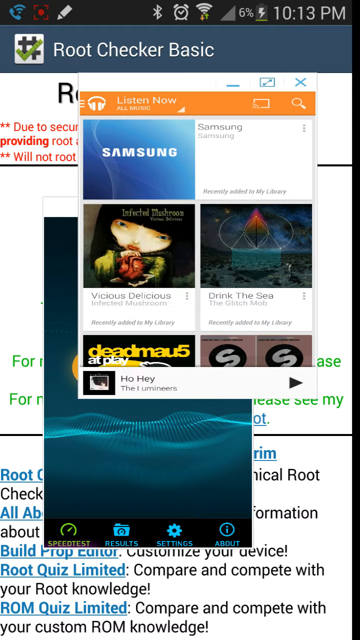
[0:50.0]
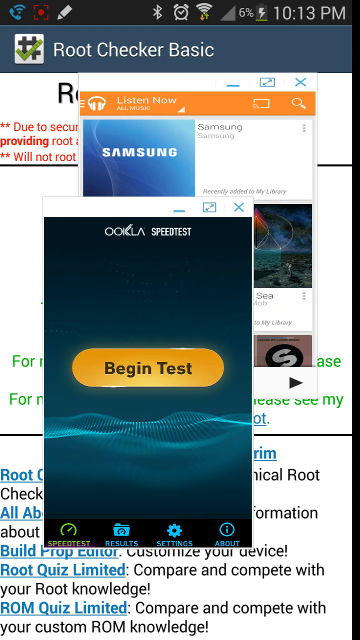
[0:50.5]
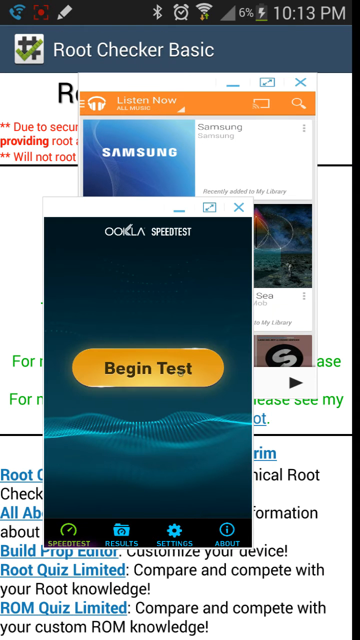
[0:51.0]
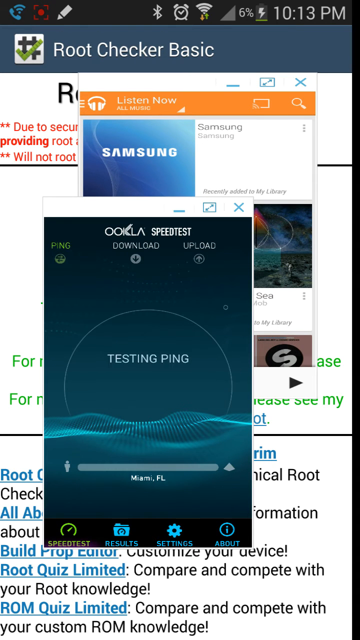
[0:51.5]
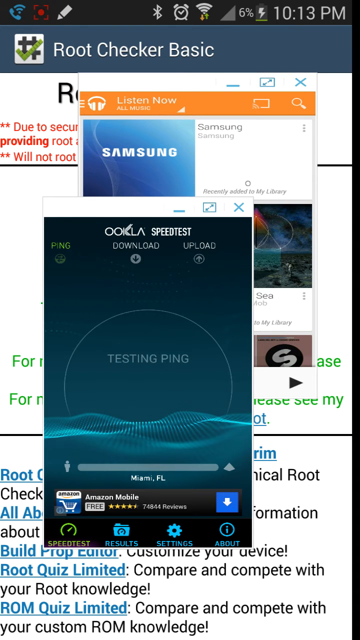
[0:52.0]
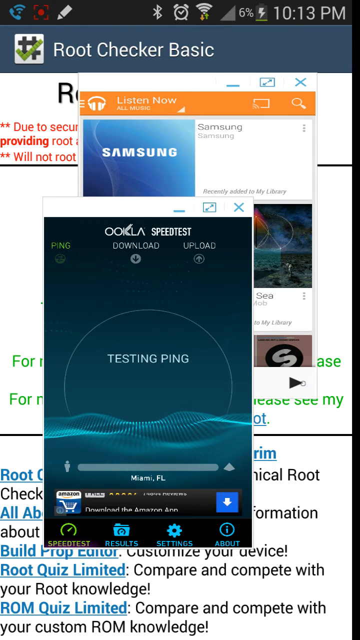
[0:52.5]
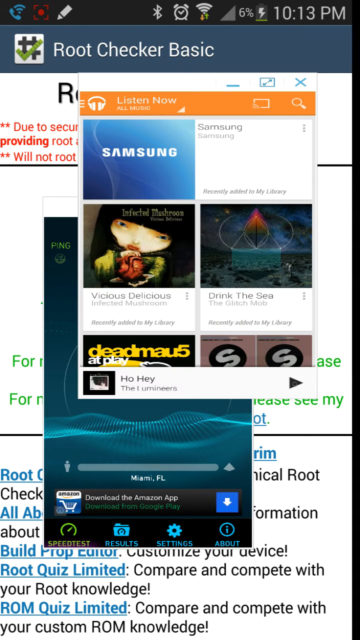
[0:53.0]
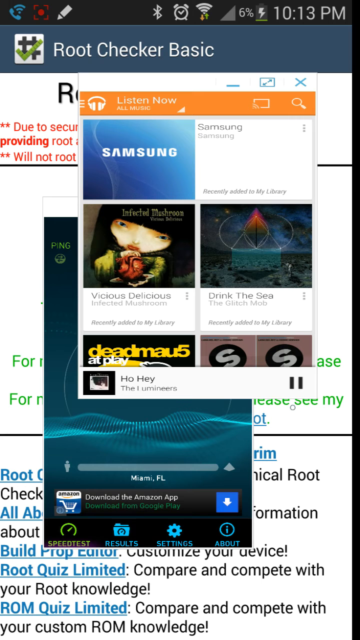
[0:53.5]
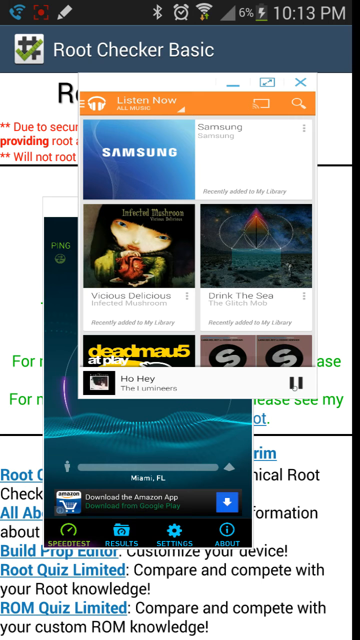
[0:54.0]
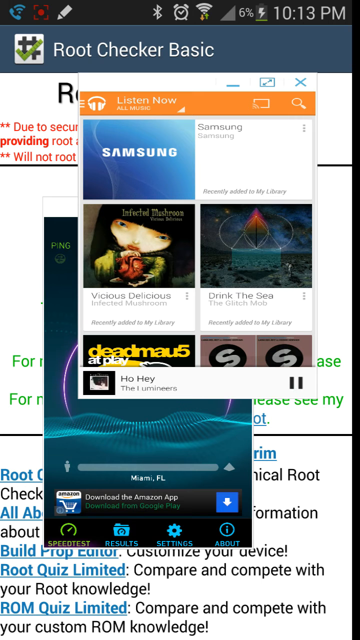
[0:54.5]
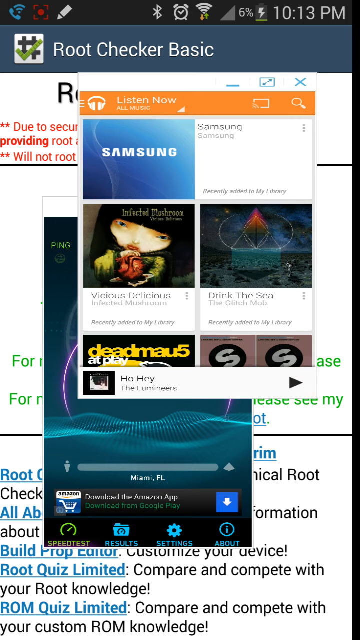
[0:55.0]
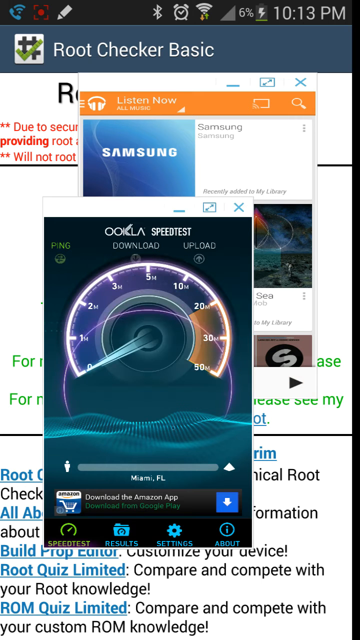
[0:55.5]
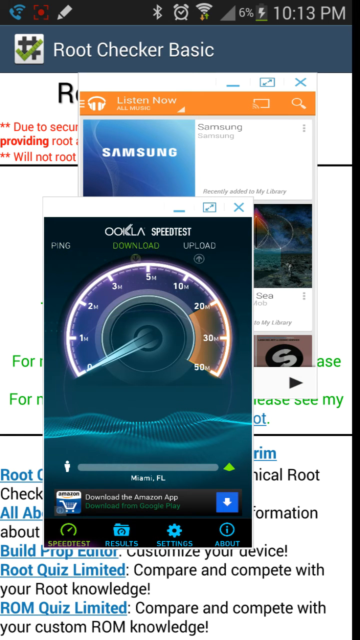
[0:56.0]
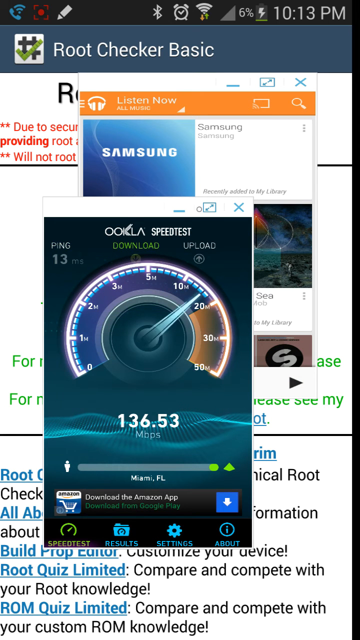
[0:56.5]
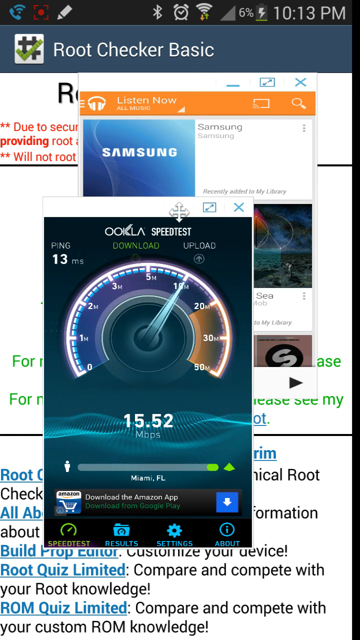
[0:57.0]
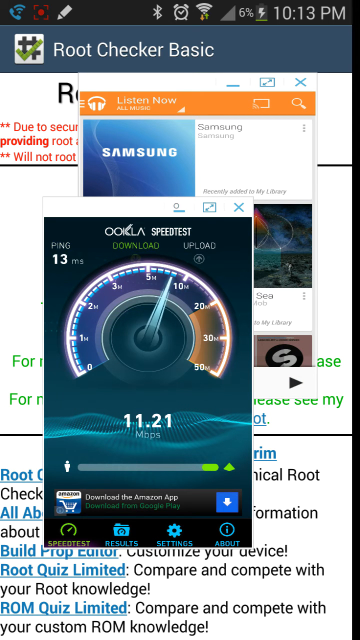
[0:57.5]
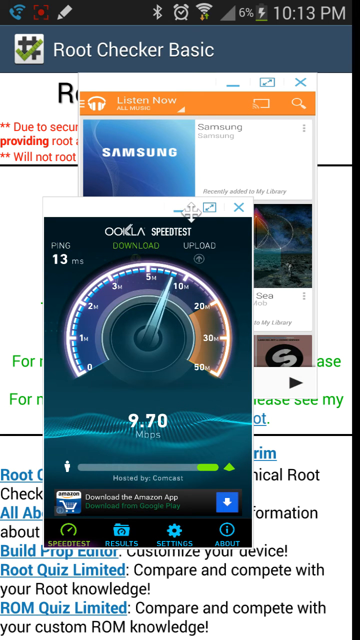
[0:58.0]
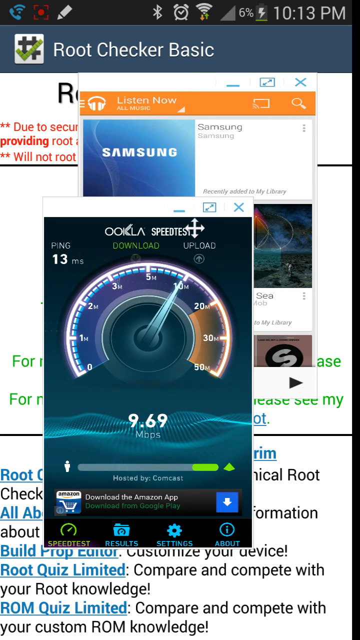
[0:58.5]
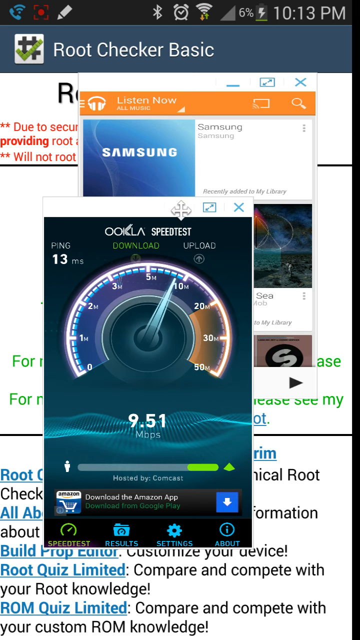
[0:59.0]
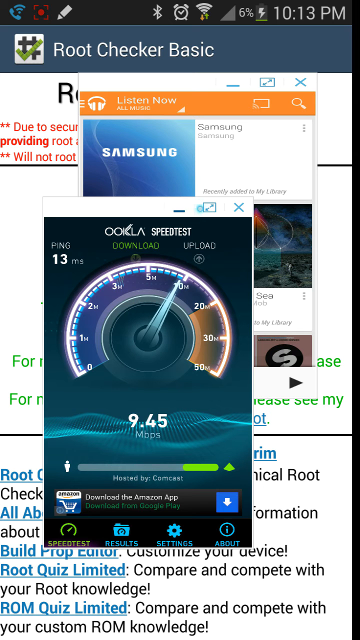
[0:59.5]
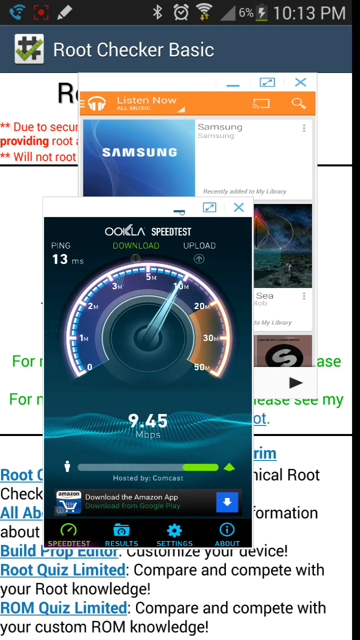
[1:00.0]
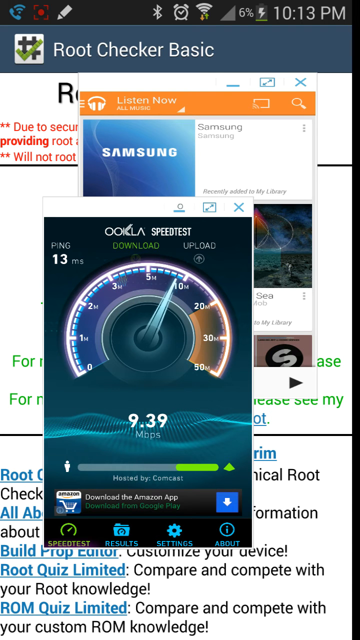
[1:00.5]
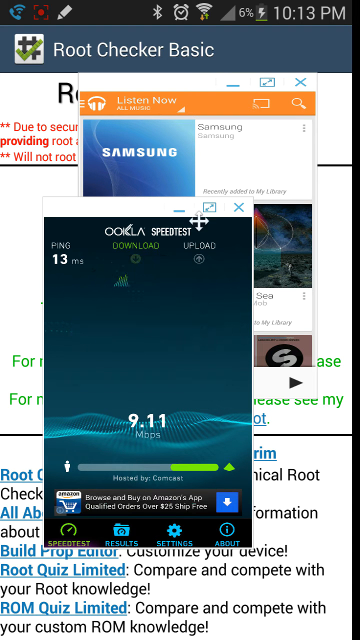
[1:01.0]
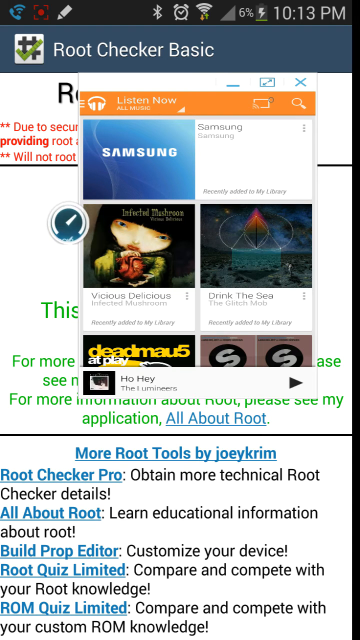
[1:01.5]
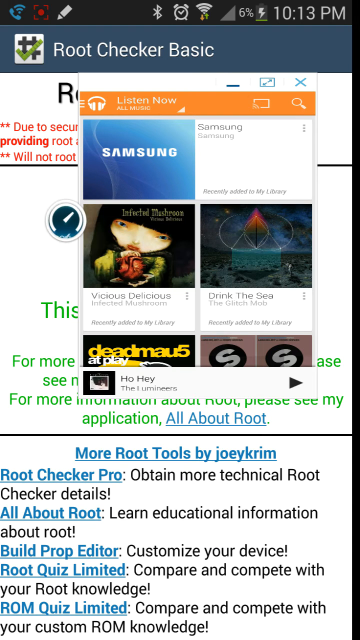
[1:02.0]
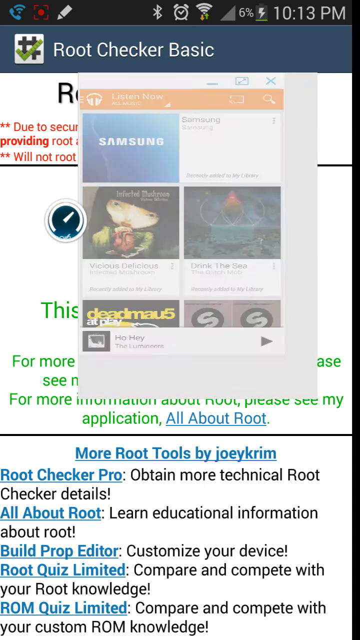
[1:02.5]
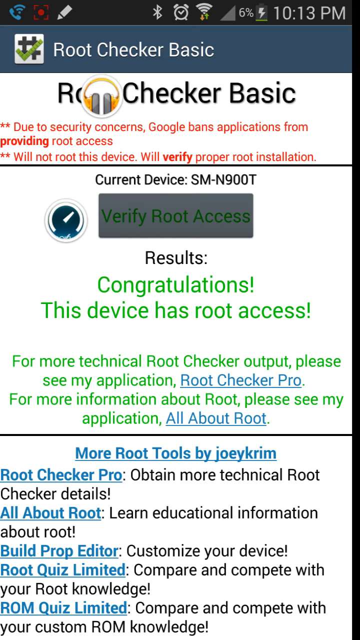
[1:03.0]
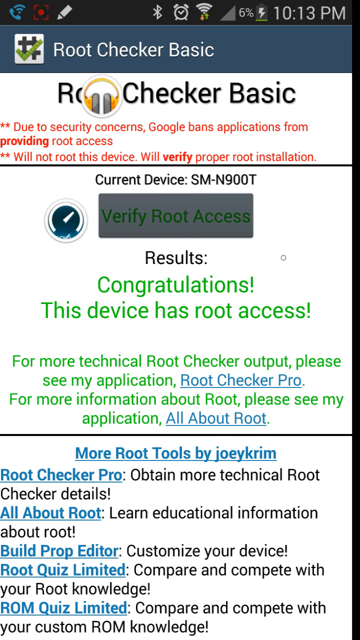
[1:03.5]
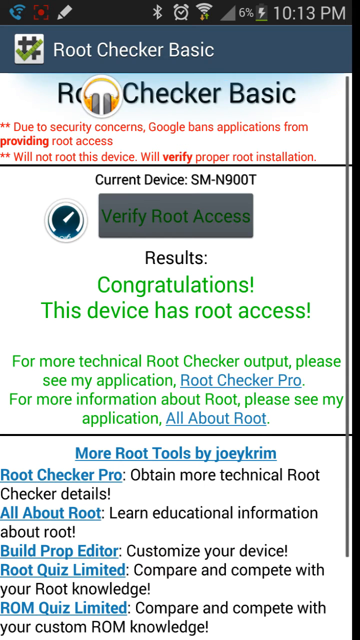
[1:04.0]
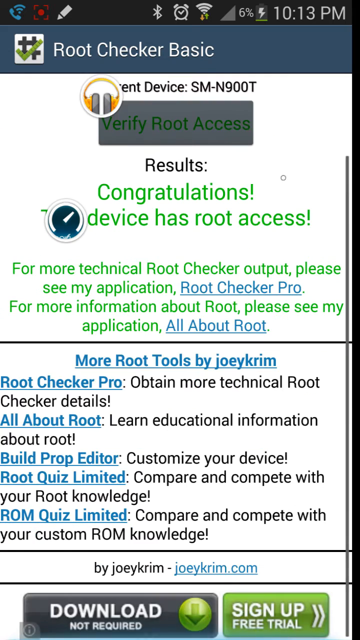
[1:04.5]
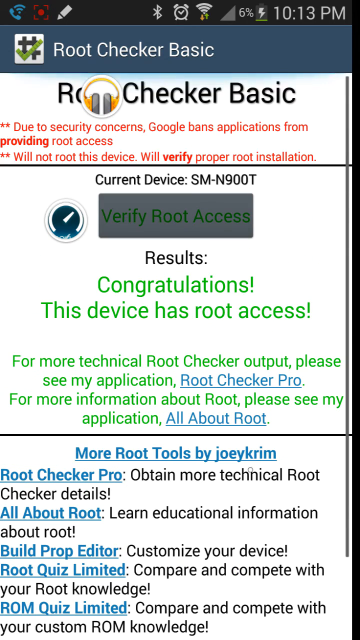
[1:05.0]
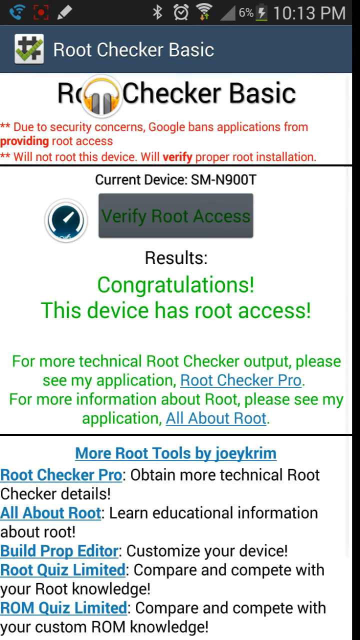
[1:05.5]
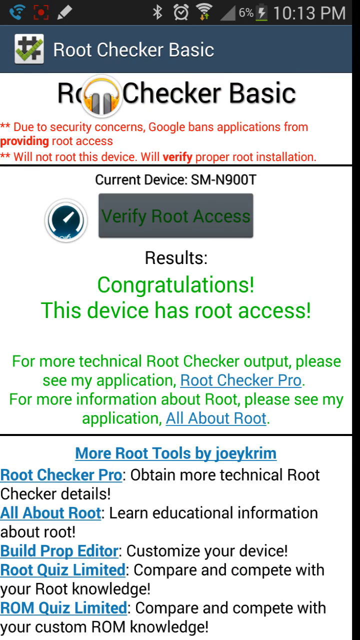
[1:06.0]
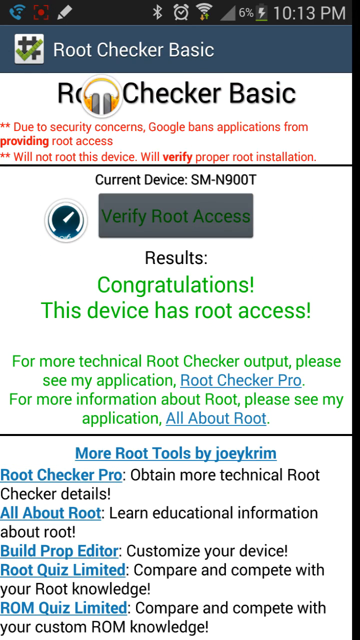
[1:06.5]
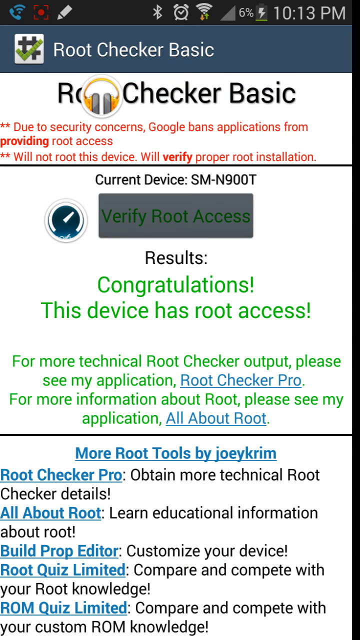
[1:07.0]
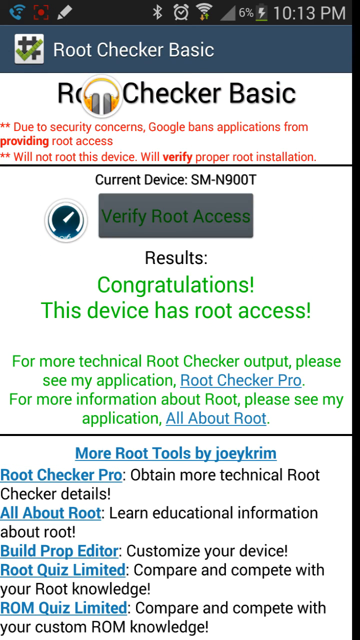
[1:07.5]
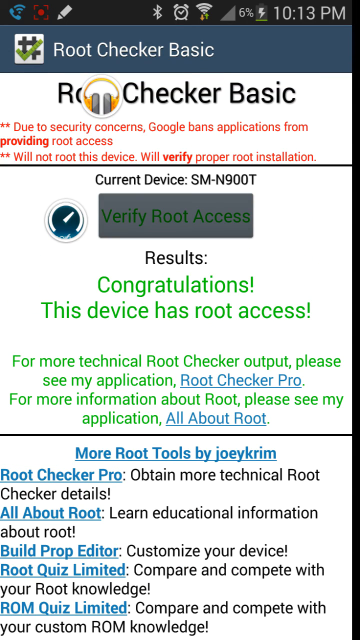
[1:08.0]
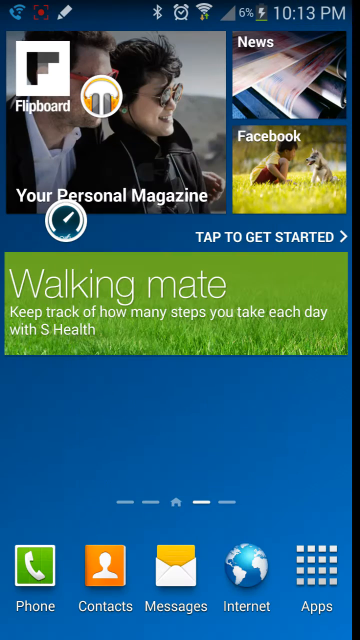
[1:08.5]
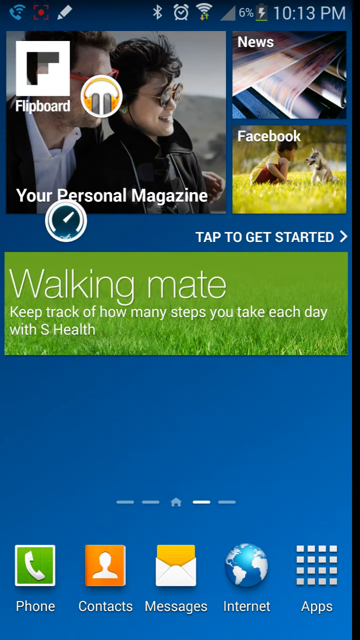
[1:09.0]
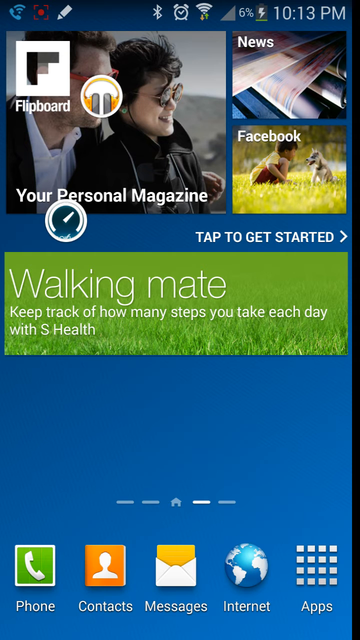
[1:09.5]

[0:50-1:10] The Speedtest app is open as a small window in the middle of the RootCheckerBasic app, next to the open ListenNow music app, where a song called Oh Hey has been played. The user pauses the song again, opens the Speedtest app and starts a speed test, minimizes it, and shows the root access app again, then begins to minimize that app.